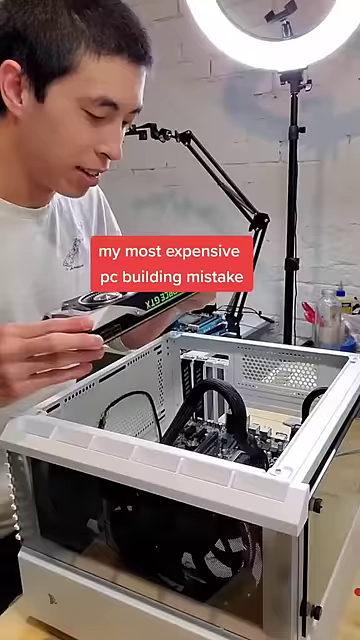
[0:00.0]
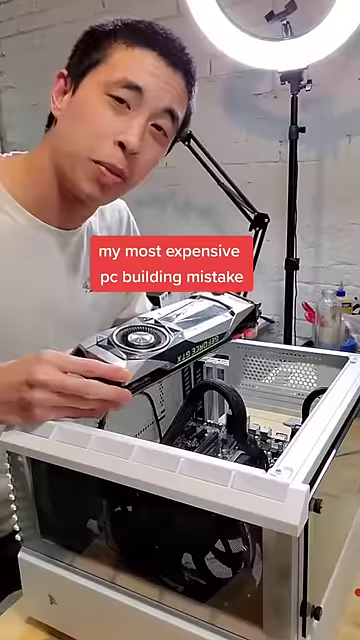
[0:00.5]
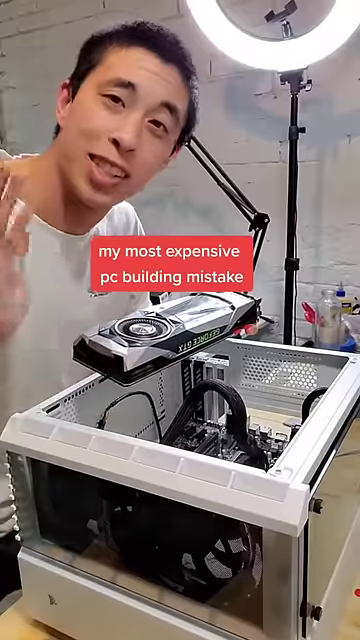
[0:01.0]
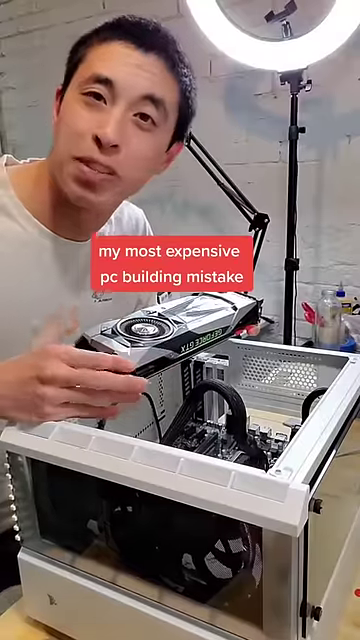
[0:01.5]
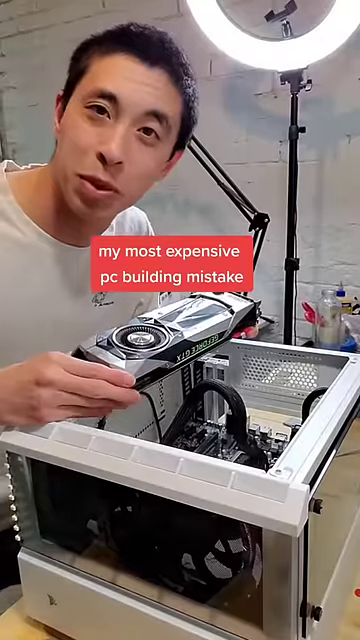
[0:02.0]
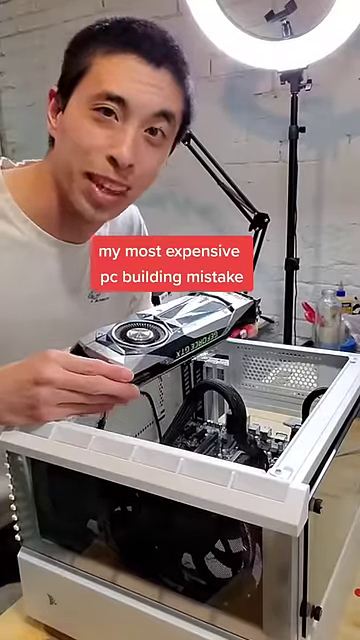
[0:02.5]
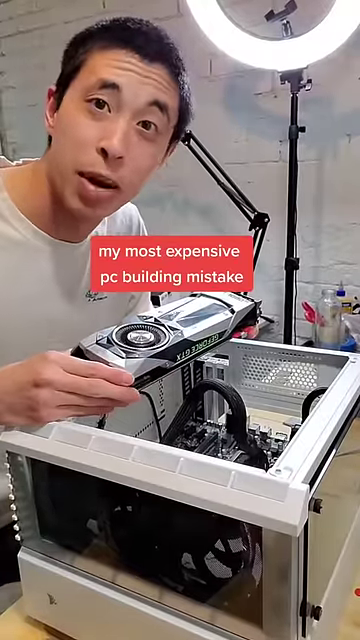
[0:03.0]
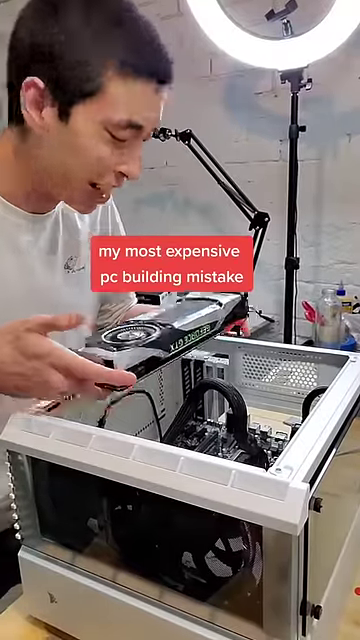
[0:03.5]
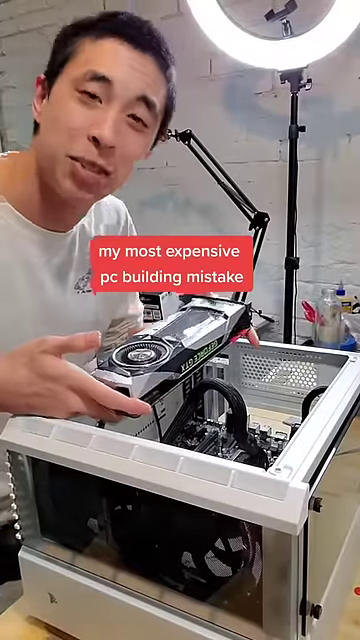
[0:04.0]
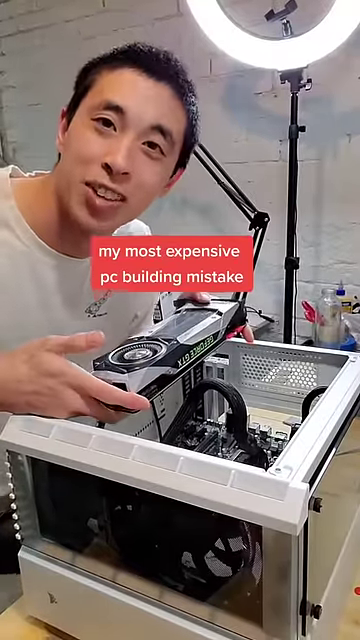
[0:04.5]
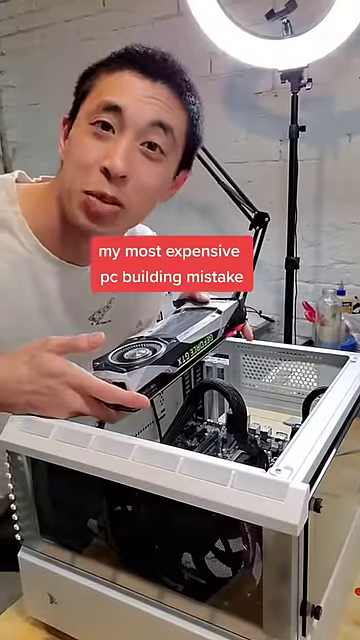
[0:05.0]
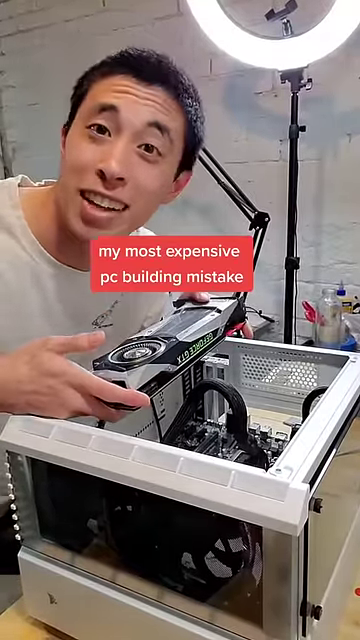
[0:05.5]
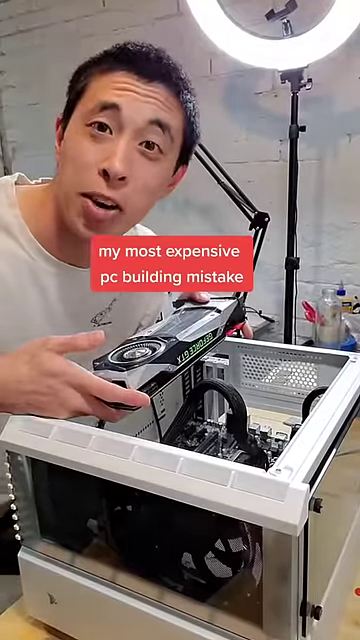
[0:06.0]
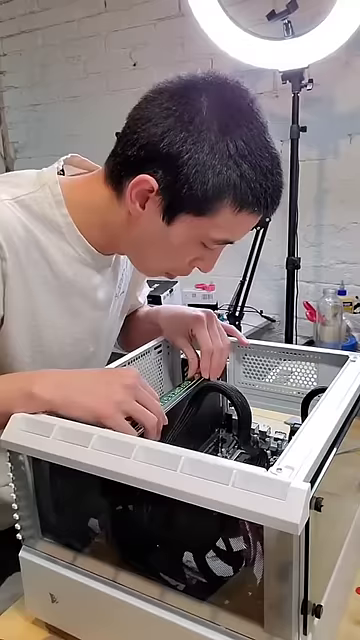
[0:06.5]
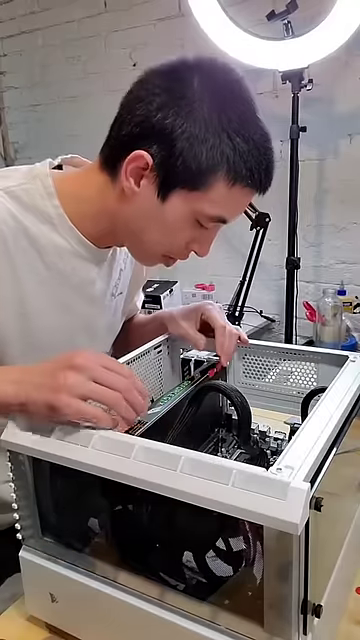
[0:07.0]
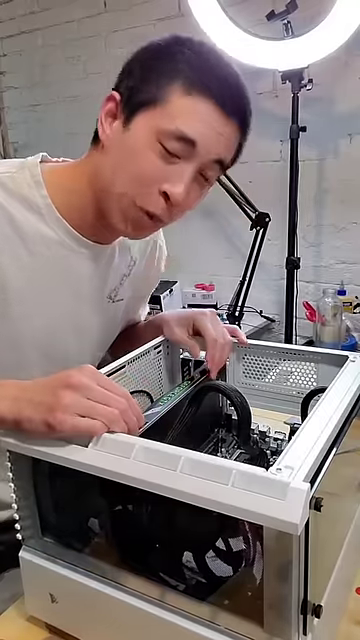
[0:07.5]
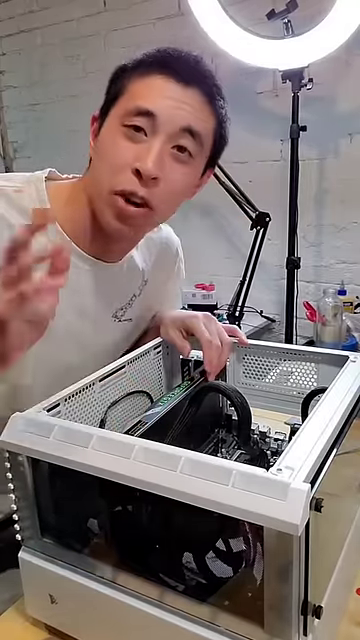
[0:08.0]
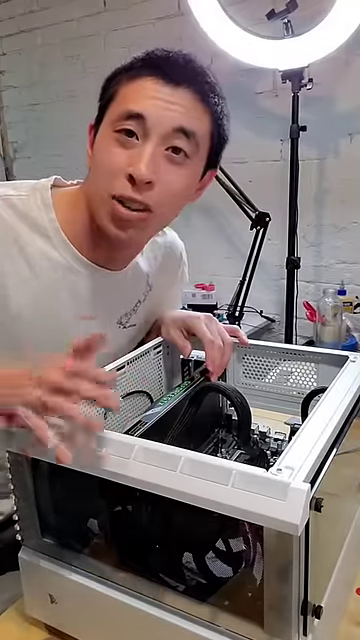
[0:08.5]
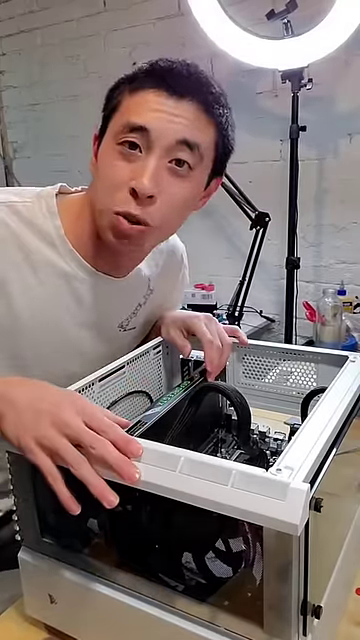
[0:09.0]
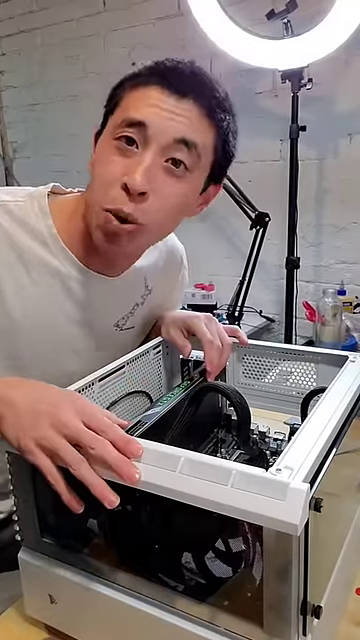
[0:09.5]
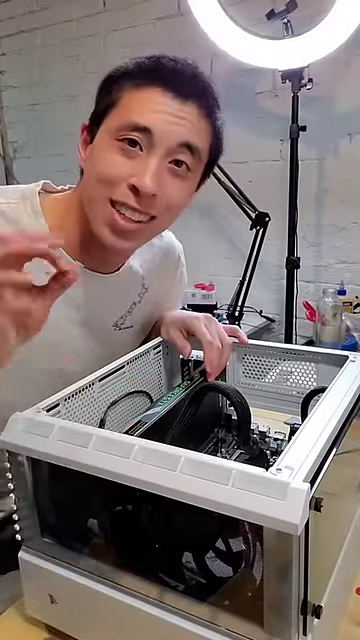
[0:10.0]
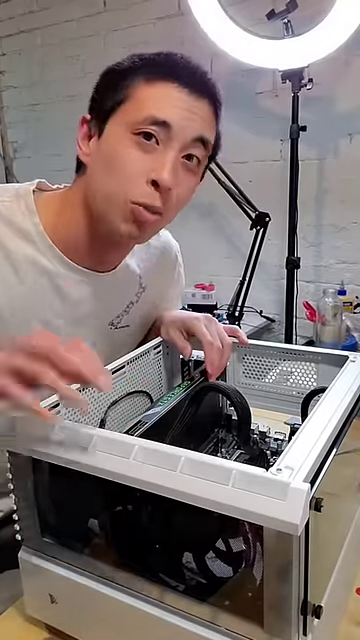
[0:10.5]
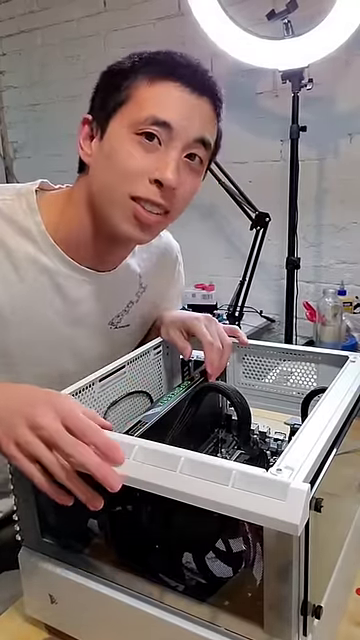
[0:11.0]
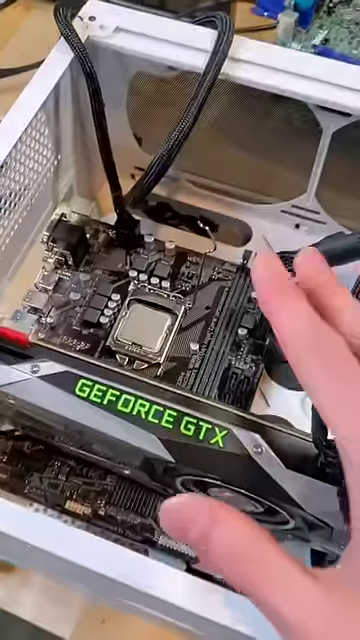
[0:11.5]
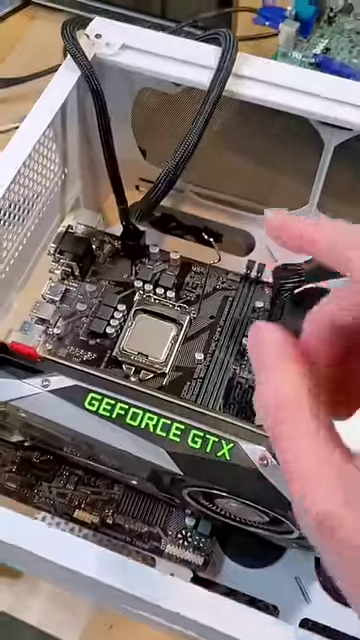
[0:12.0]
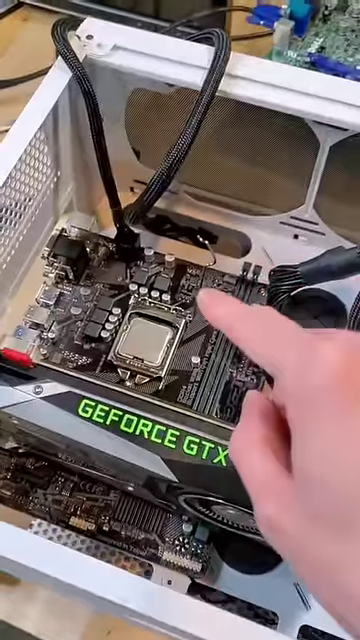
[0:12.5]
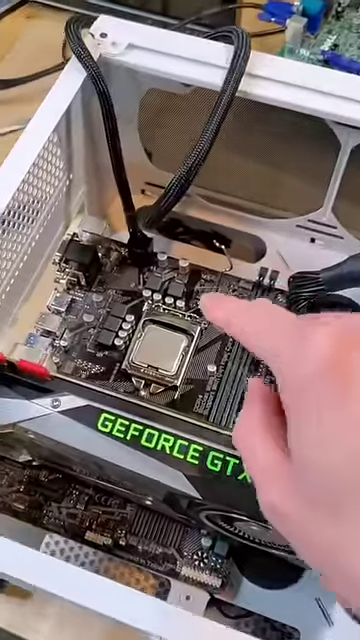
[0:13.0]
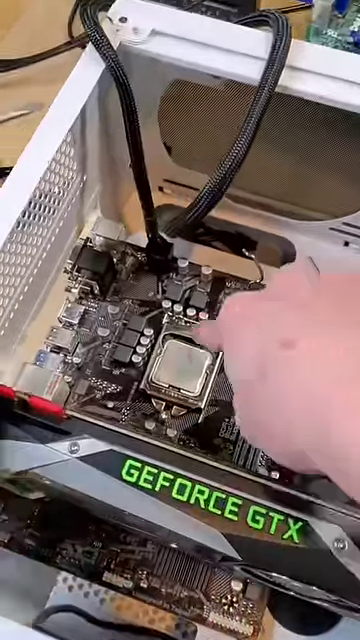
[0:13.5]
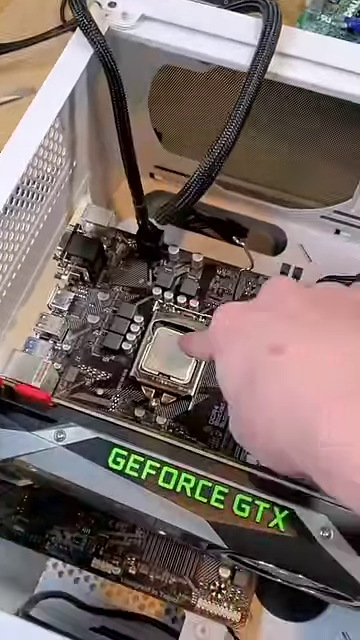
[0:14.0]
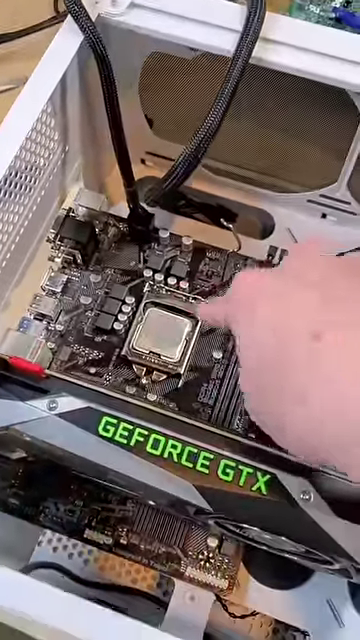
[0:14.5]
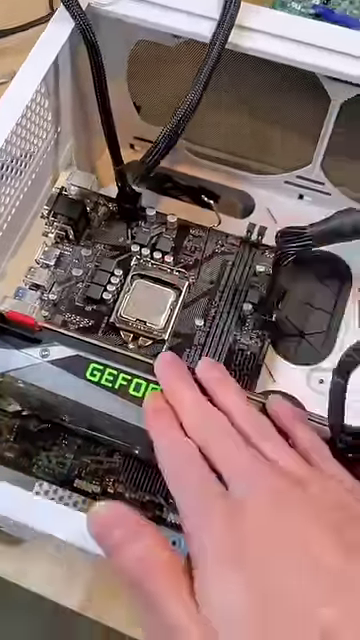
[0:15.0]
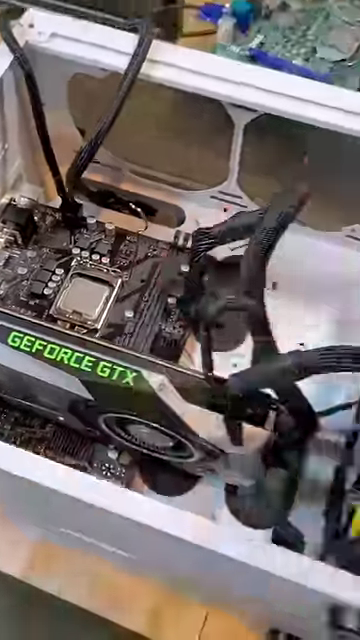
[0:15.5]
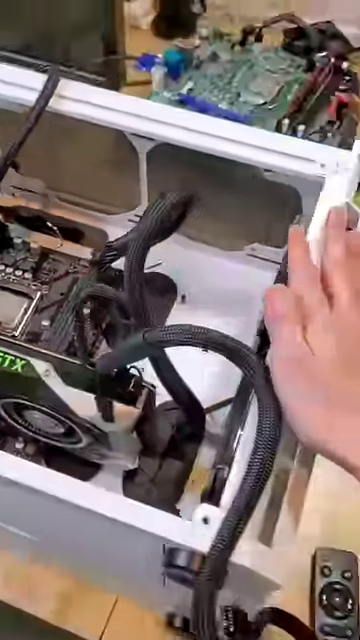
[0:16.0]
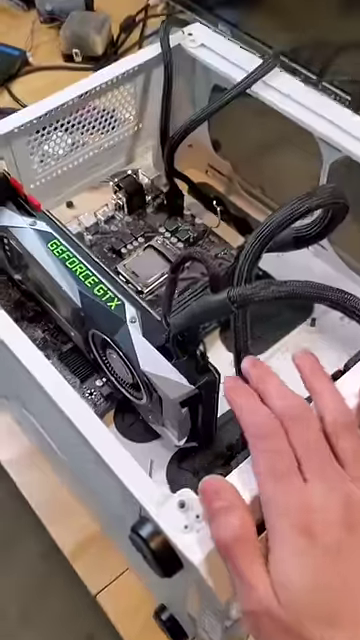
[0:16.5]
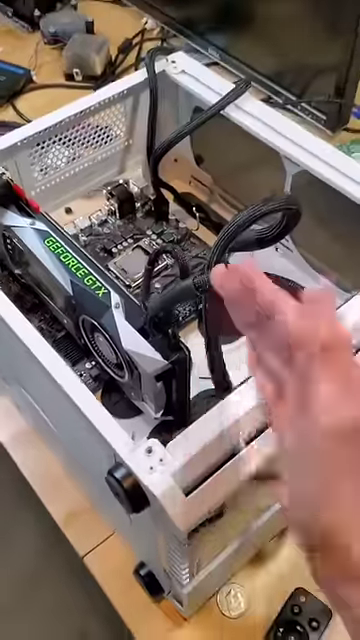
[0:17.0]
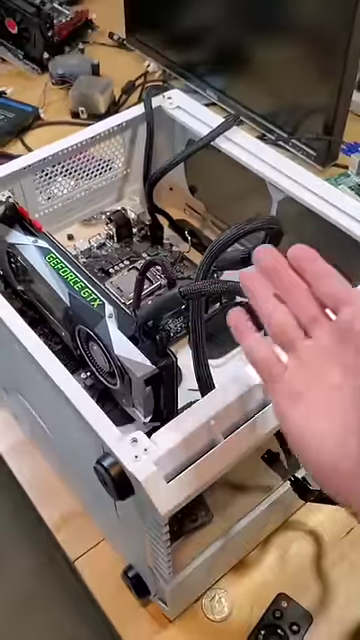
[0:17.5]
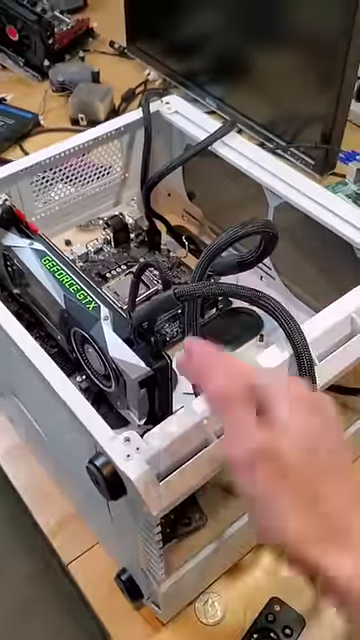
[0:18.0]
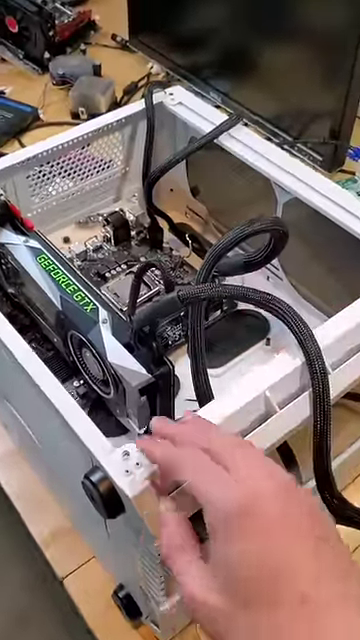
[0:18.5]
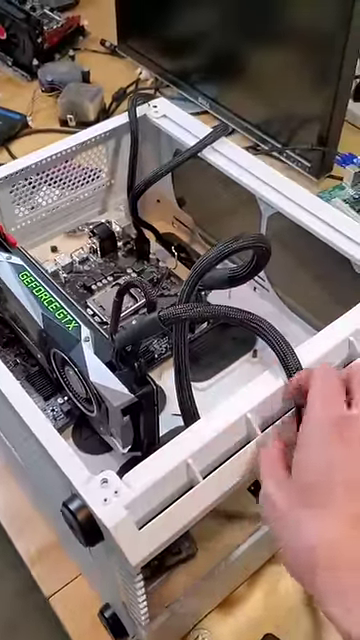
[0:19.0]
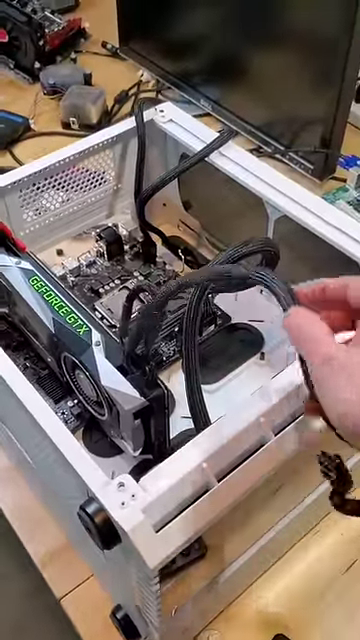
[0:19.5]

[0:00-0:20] An Asian man who appears to be in his early 30s looks directly at the screen. He is standing in front of a light, and on-screen text asks "what is the most expensive PC building mistake that you have made?" He makes eye contact with the camera and uses hand gestures as he speaks. A camera view then shows what is possibly a motherboard and a GPU case; the computer seems to be very high tech and up to date.